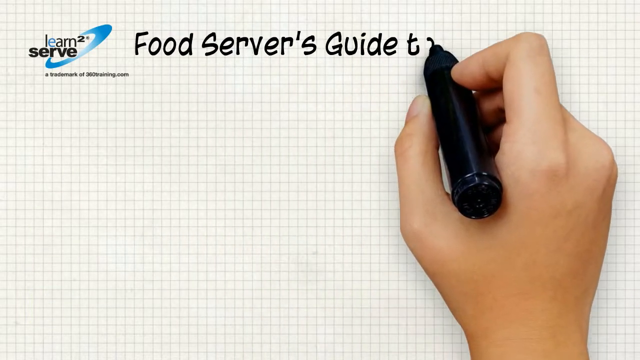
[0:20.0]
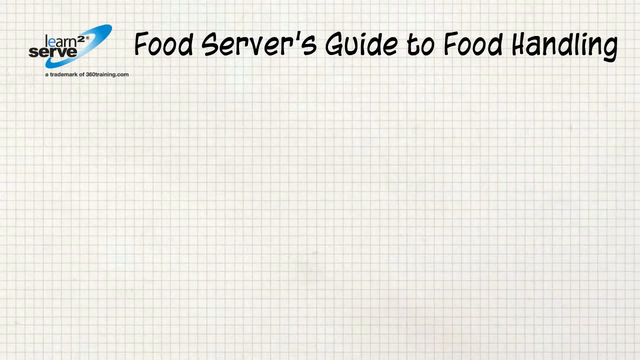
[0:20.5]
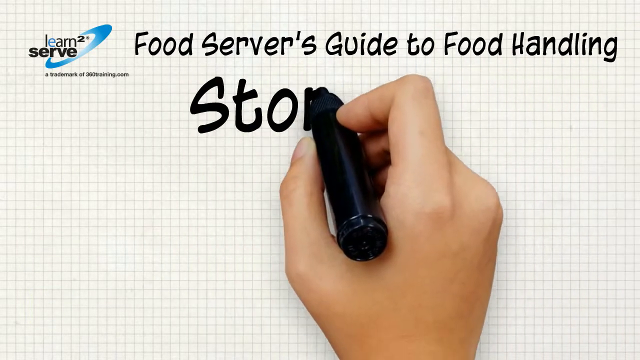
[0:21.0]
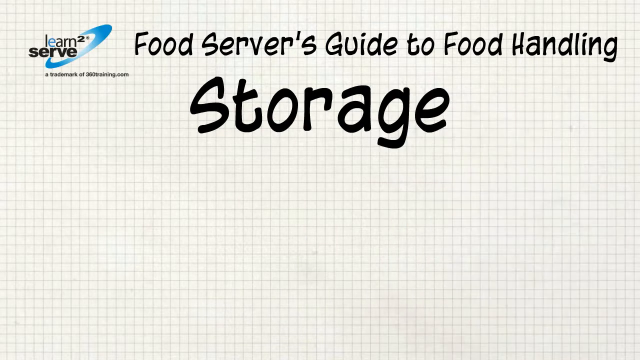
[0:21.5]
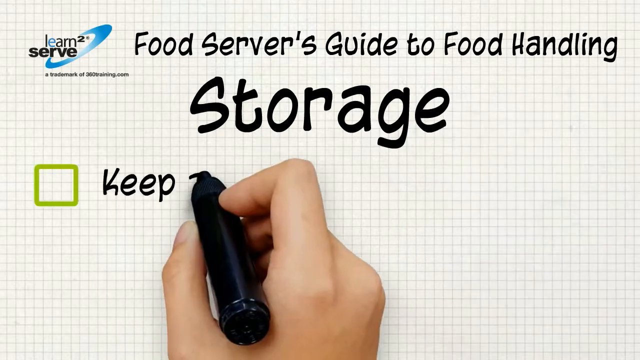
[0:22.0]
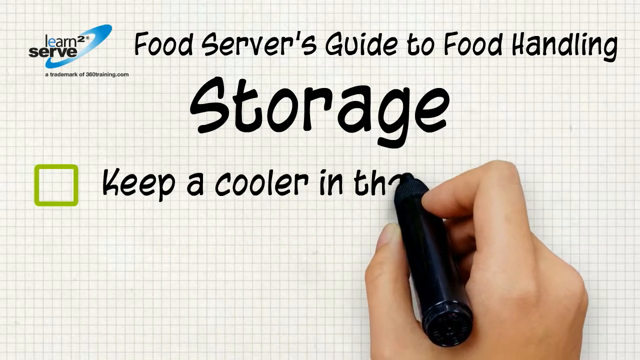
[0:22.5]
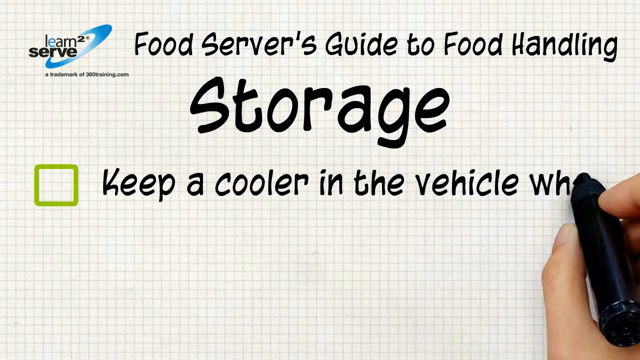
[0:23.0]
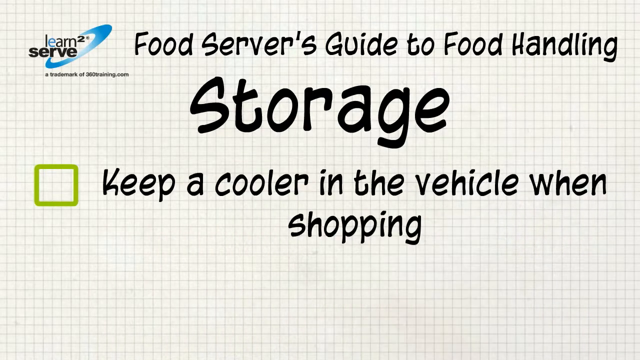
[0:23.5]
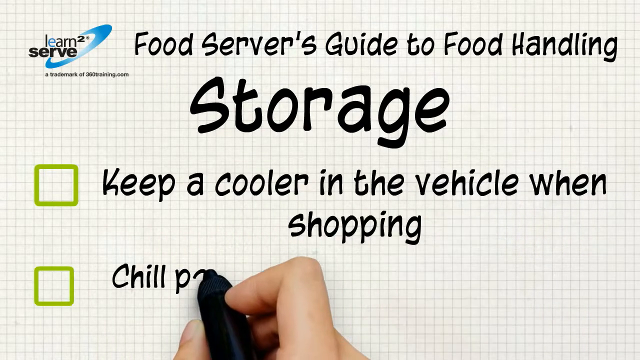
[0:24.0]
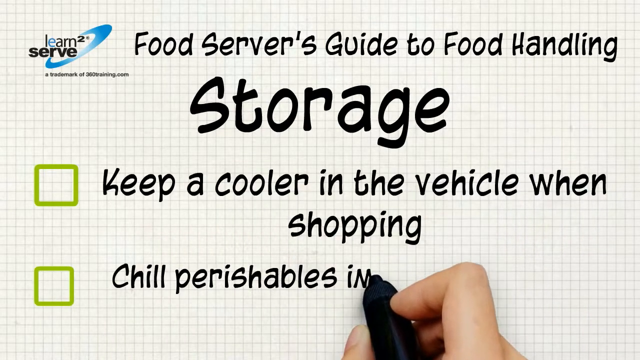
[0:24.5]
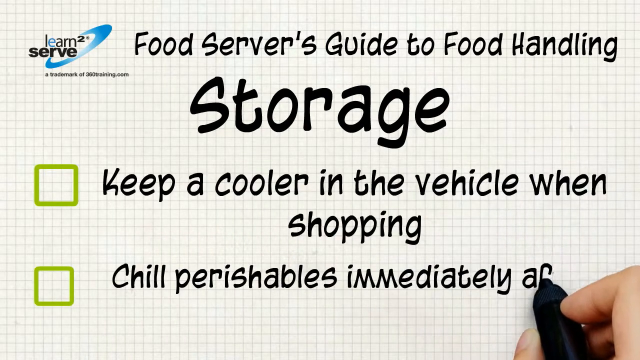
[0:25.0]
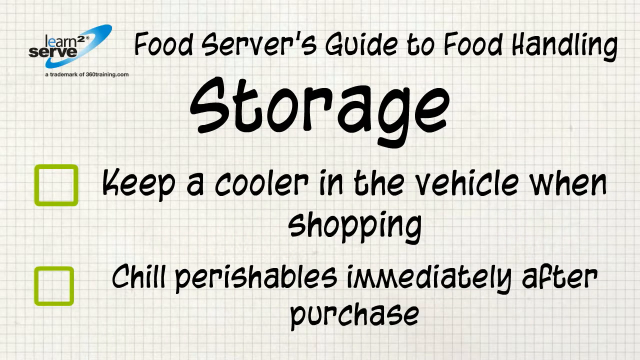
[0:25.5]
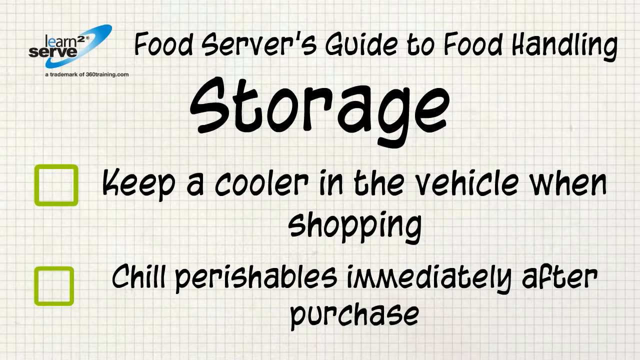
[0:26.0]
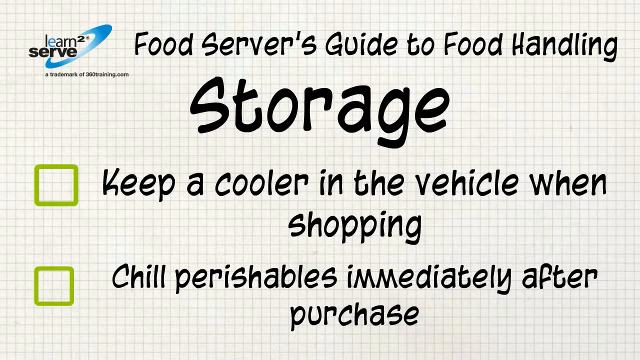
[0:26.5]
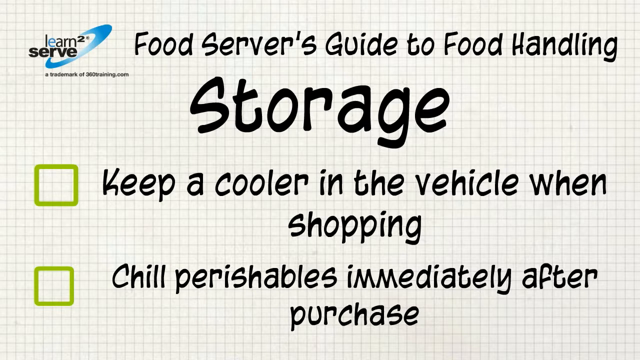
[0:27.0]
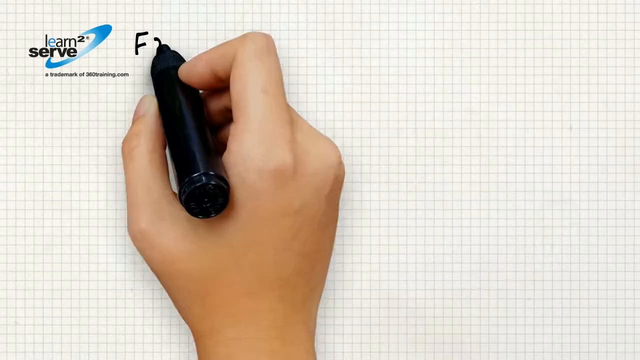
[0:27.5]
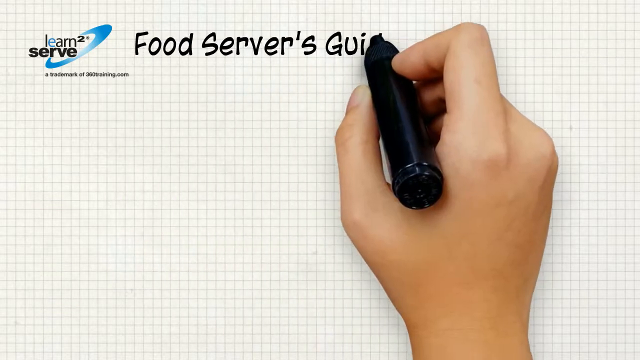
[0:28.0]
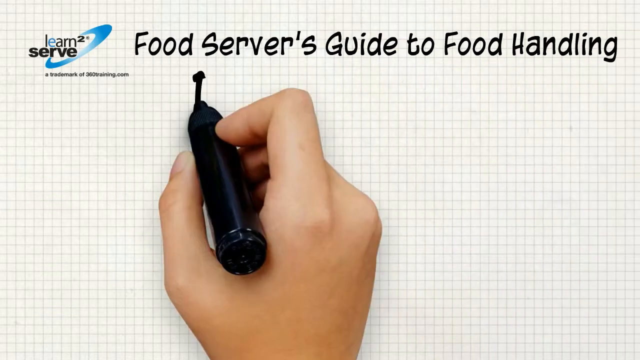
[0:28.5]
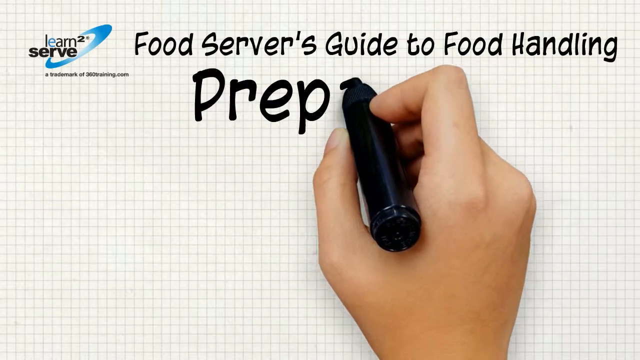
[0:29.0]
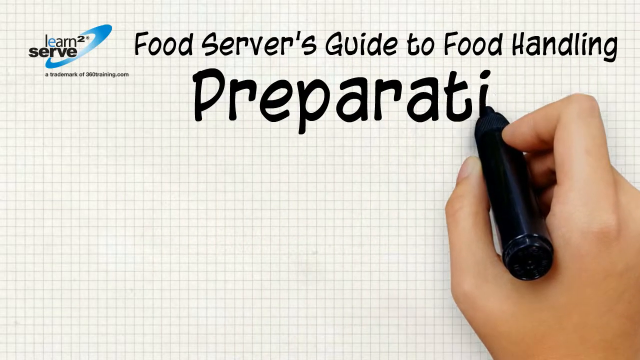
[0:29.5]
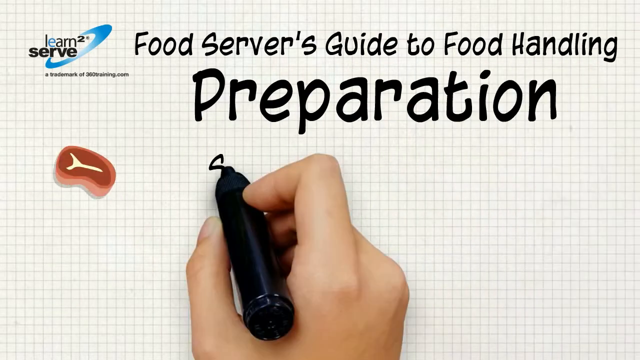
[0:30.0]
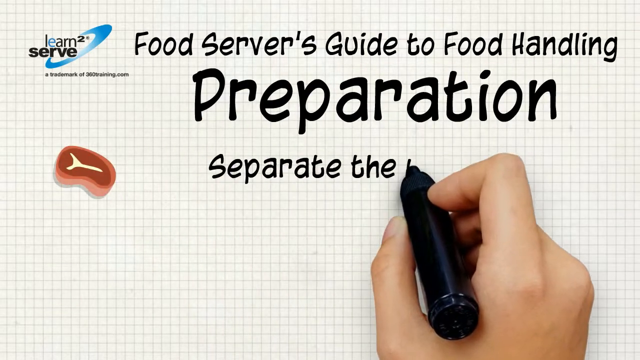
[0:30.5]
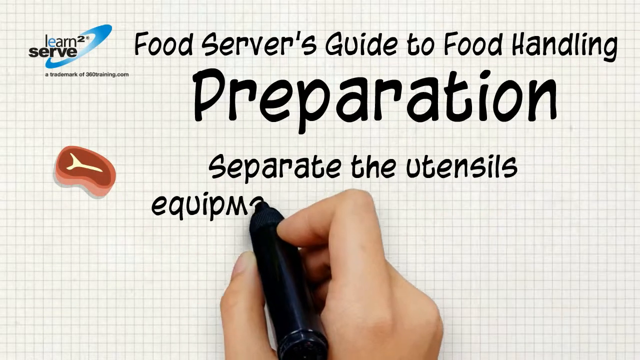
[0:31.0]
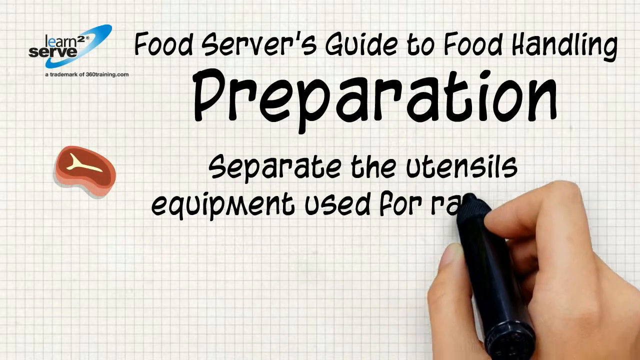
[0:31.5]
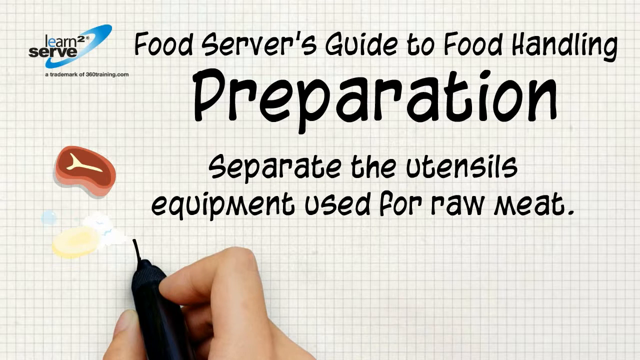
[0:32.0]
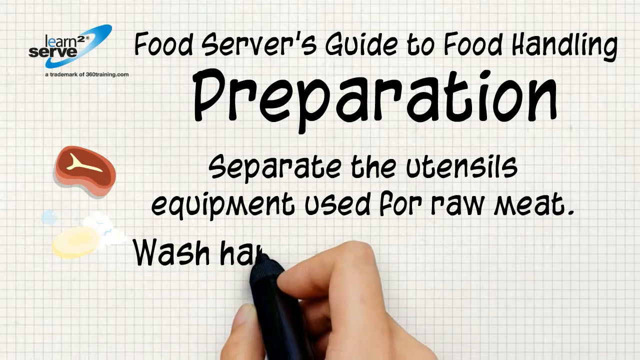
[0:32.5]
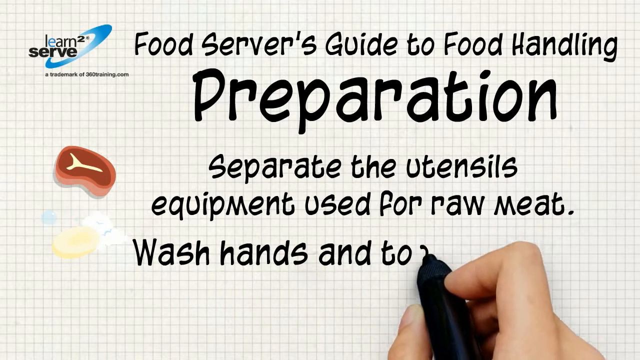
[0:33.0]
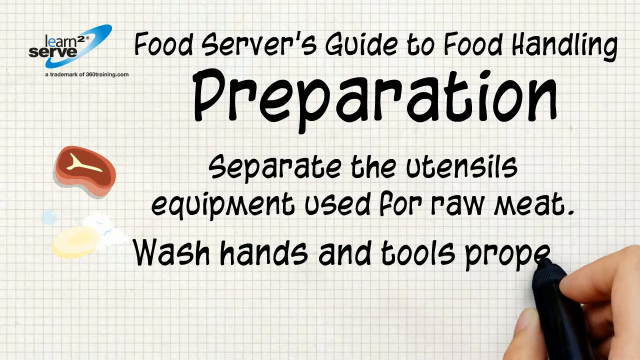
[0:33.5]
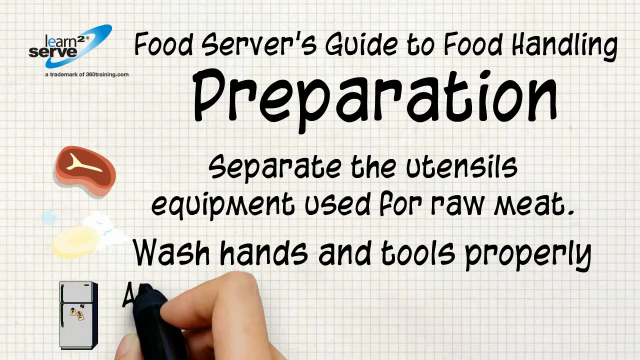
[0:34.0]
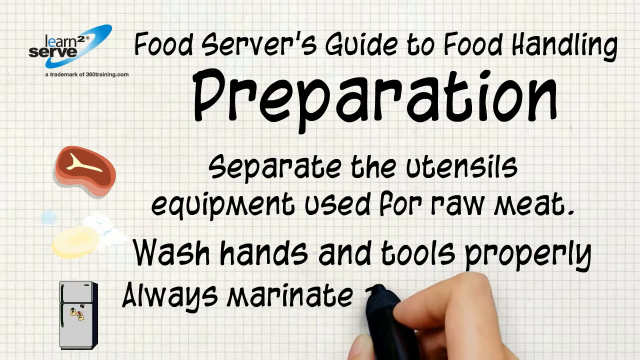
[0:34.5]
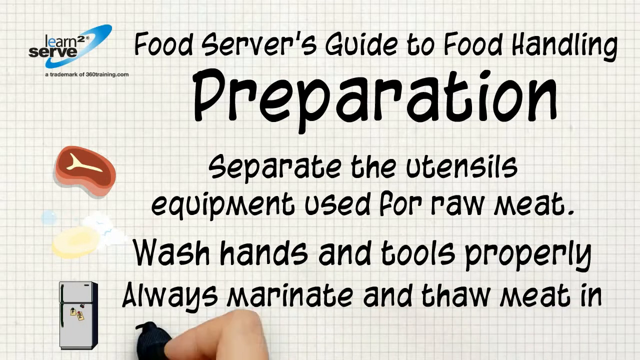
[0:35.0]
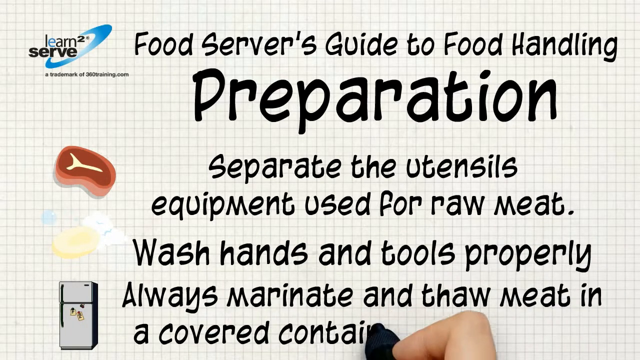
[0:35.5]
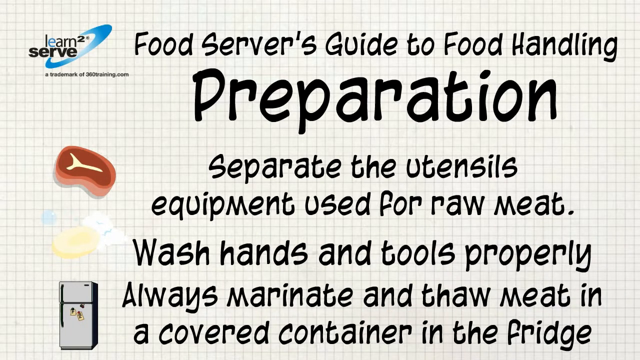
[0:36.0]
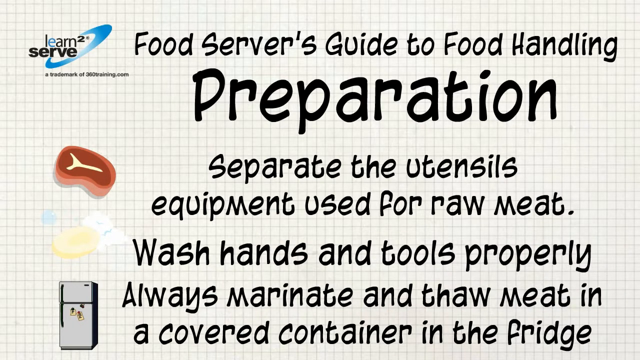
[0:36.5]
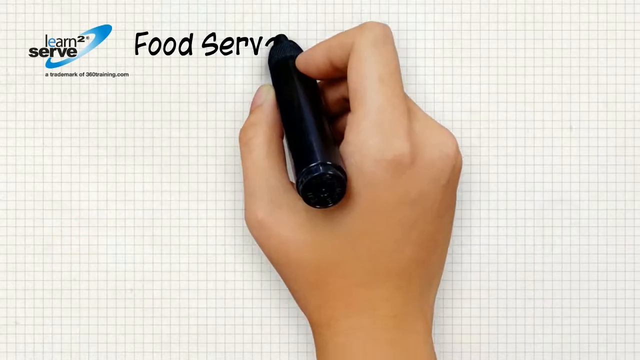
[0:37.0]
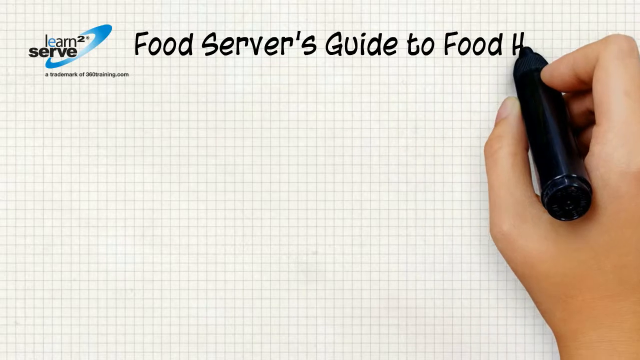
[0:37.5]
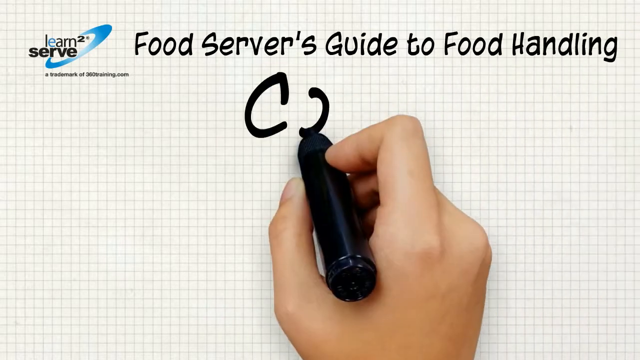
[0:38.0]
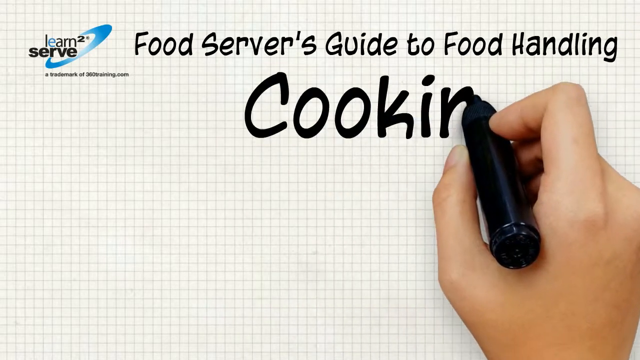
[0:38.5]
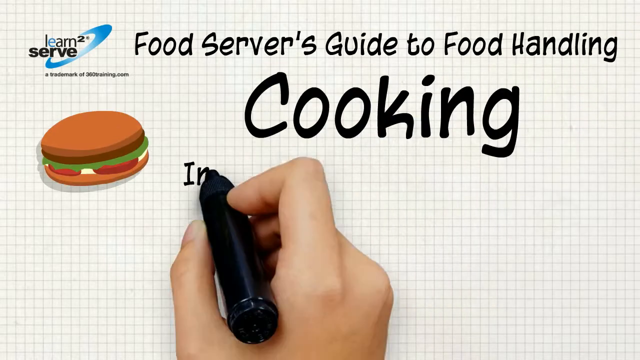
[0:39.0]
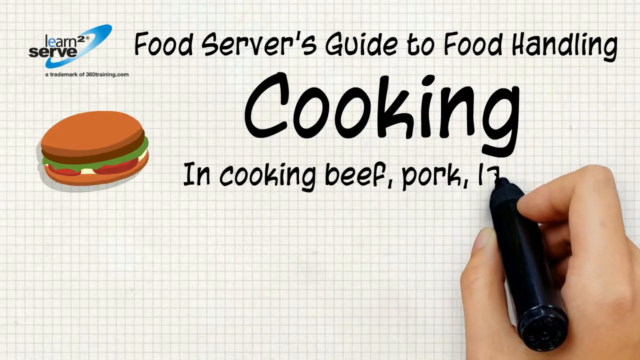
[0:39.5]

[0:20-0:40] The food server's guide to food handling continues, with the guidelines written in black. A storage section shows how to store different foods and how to handle the different types of food. Next comes preparation, covering how to separate utensils, how to wash them, and how to marinate. A cooking section follows, with an example of a food shown. Written examples are given throughout these sections, and a hand is seen writing with a pen.